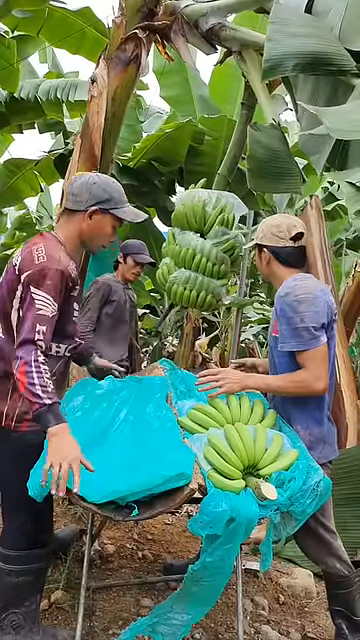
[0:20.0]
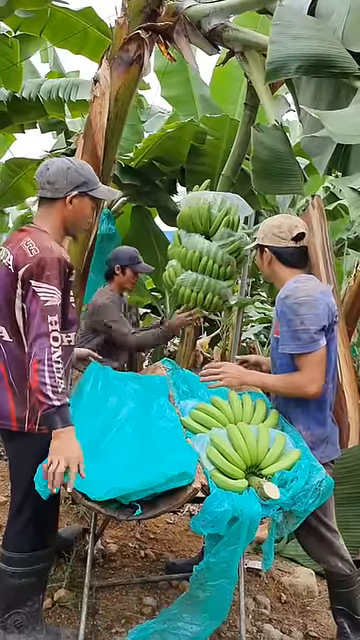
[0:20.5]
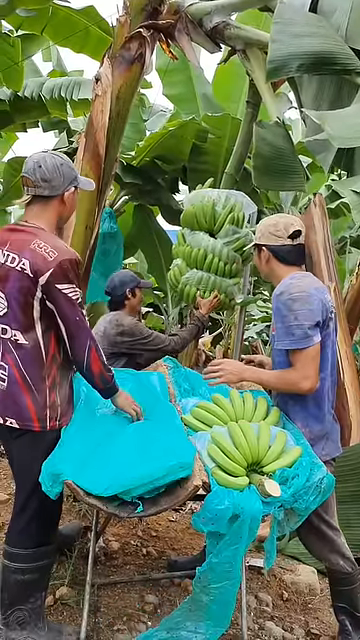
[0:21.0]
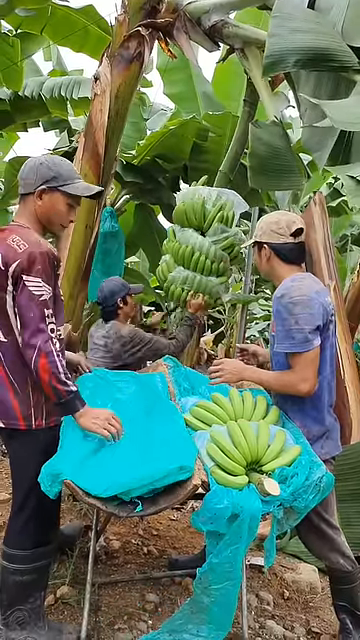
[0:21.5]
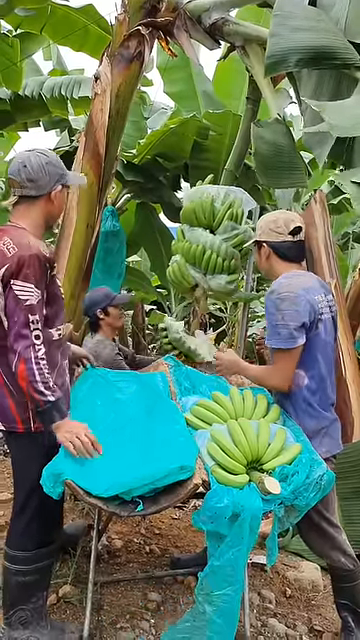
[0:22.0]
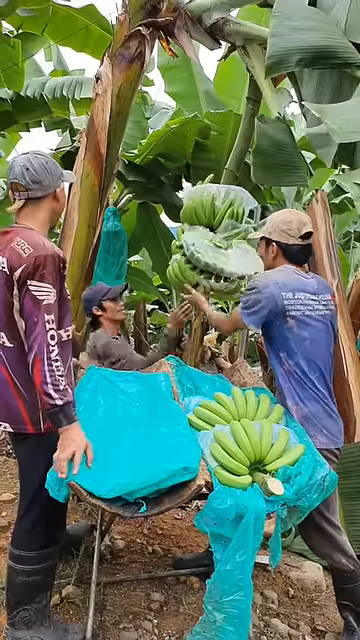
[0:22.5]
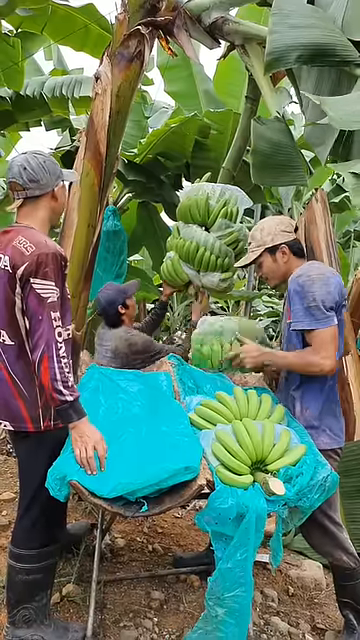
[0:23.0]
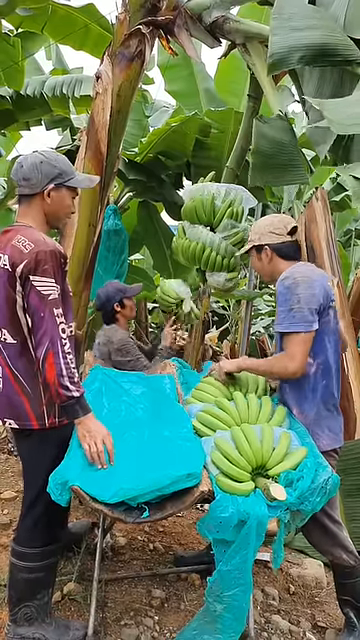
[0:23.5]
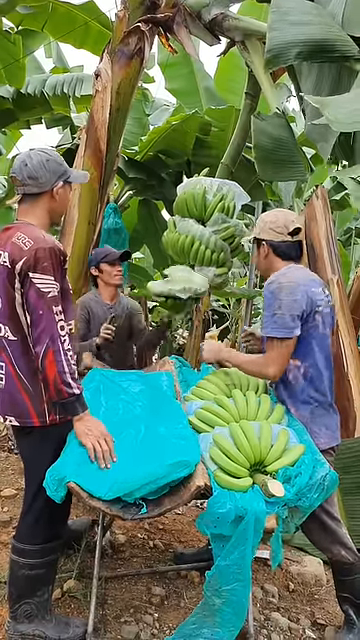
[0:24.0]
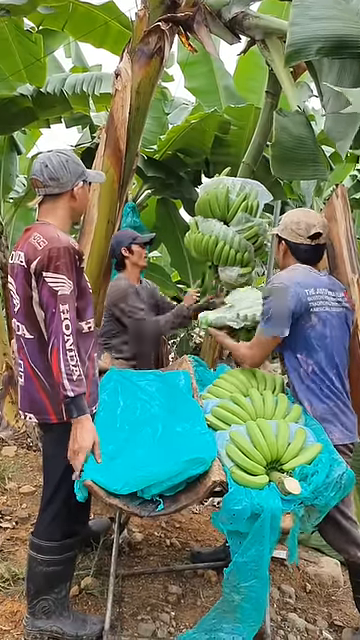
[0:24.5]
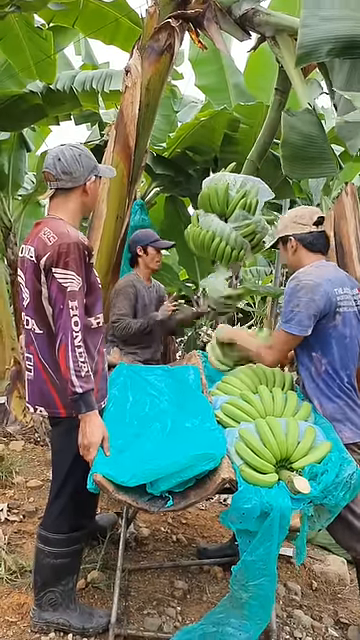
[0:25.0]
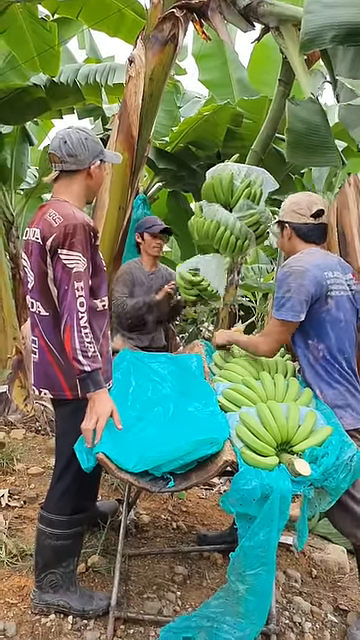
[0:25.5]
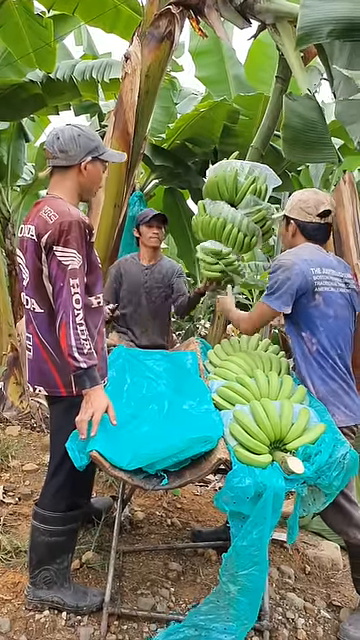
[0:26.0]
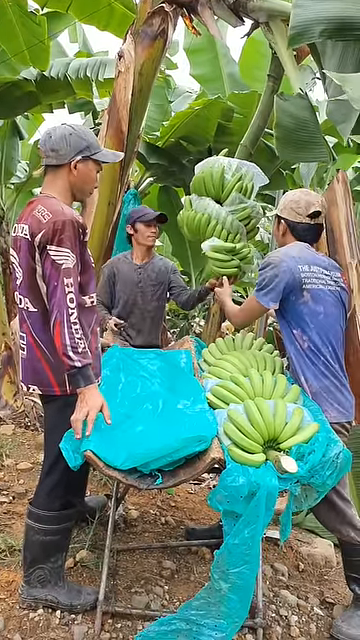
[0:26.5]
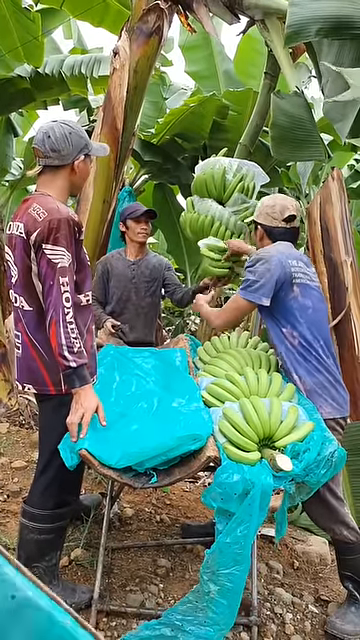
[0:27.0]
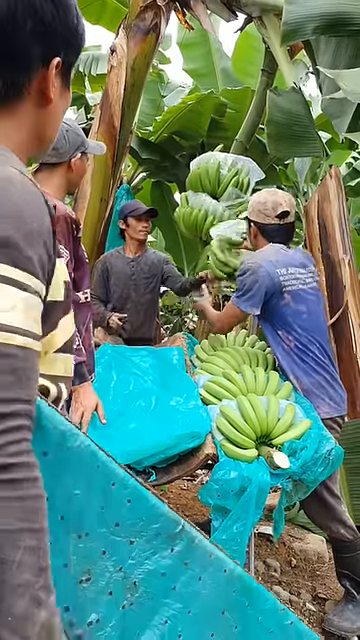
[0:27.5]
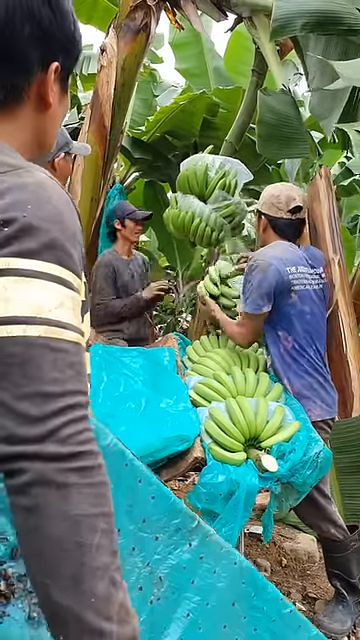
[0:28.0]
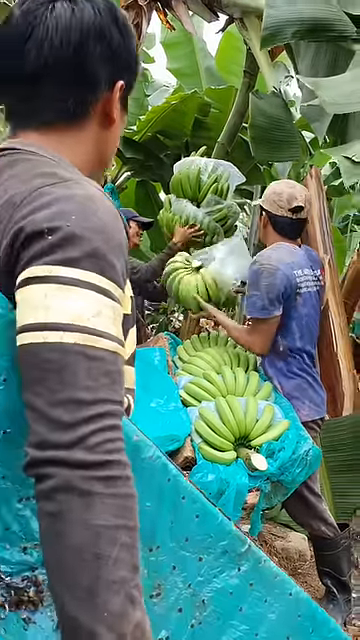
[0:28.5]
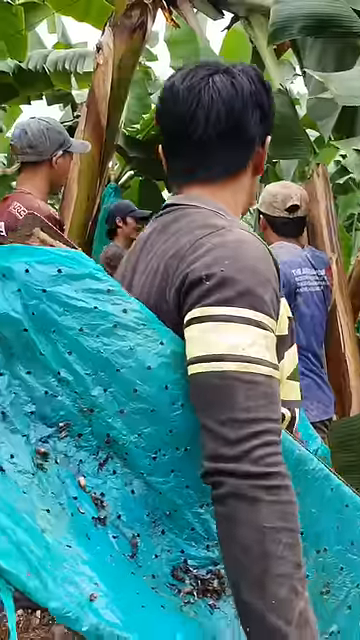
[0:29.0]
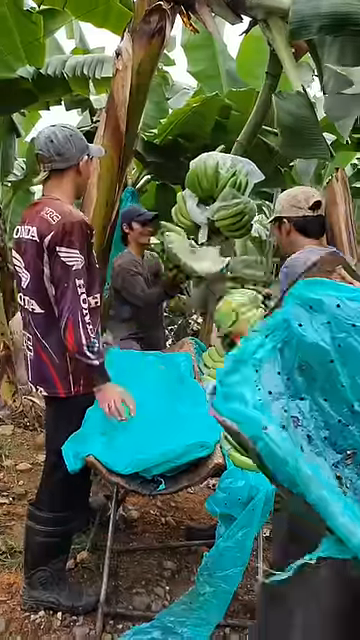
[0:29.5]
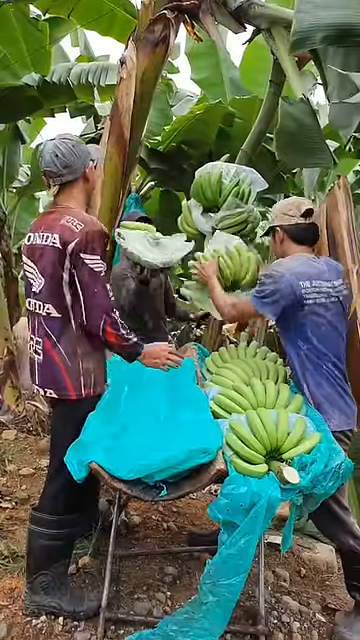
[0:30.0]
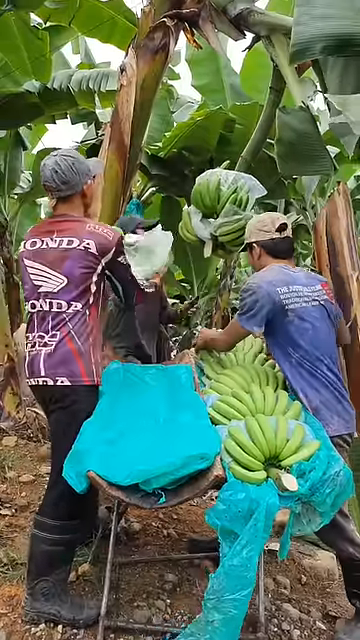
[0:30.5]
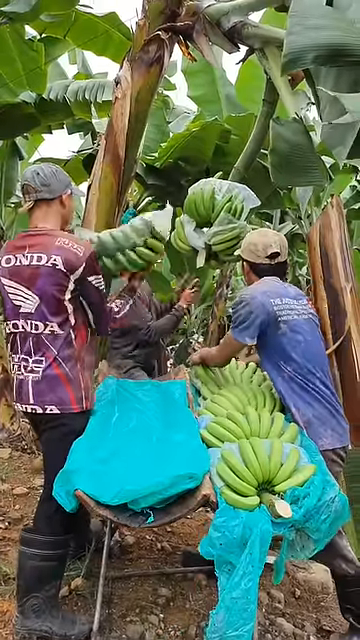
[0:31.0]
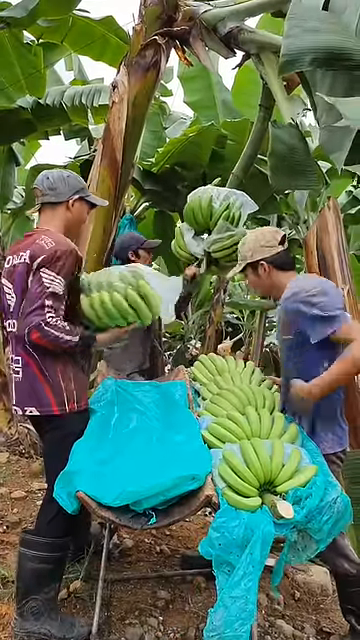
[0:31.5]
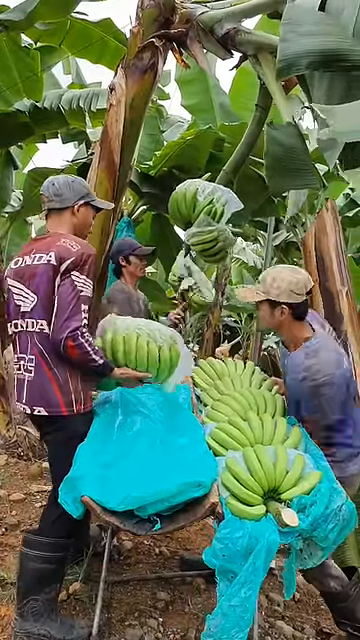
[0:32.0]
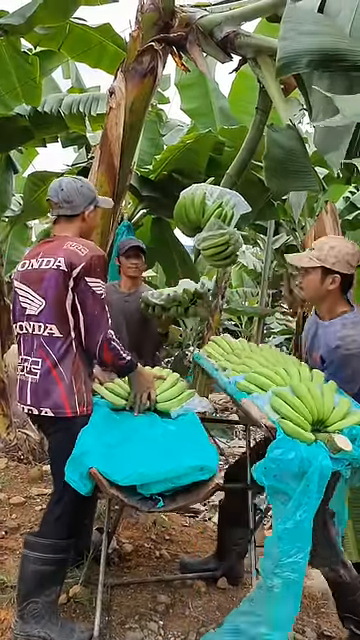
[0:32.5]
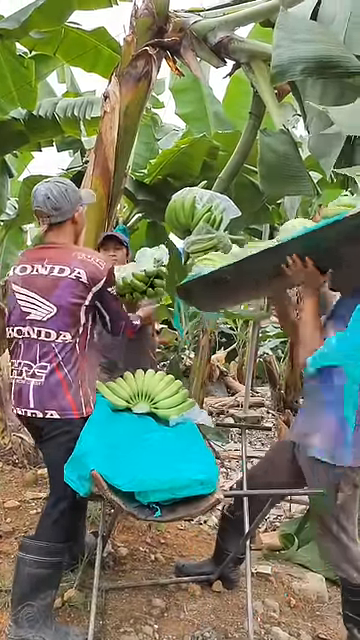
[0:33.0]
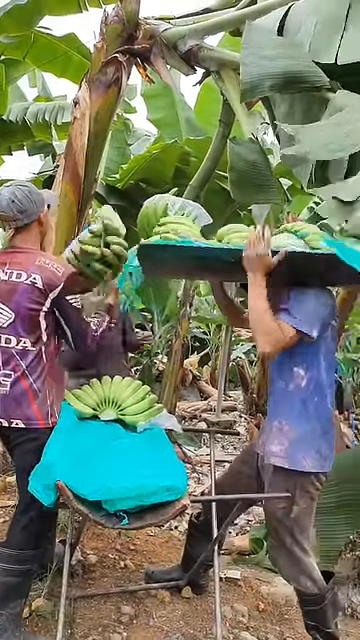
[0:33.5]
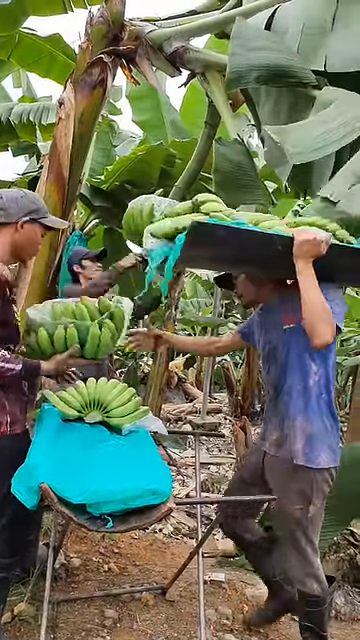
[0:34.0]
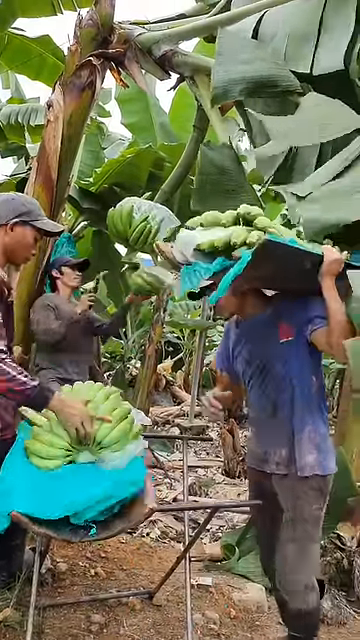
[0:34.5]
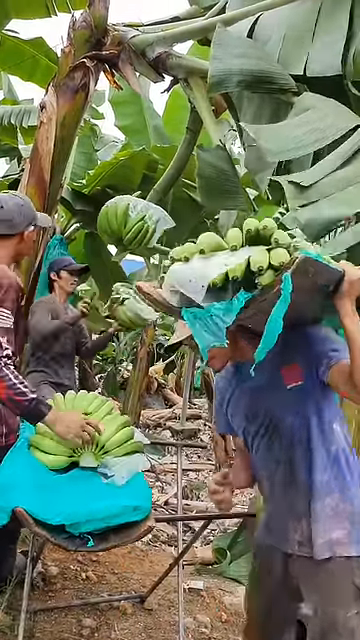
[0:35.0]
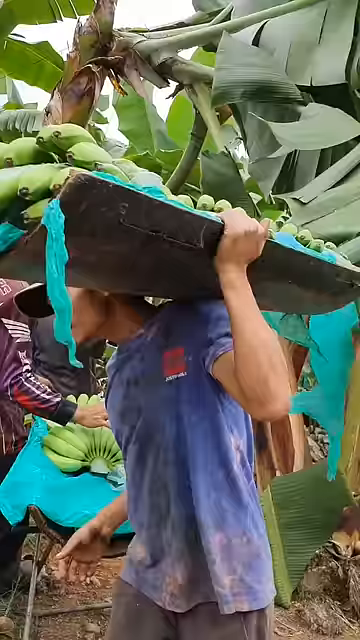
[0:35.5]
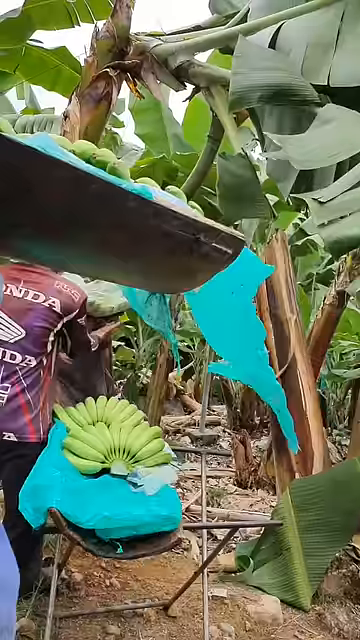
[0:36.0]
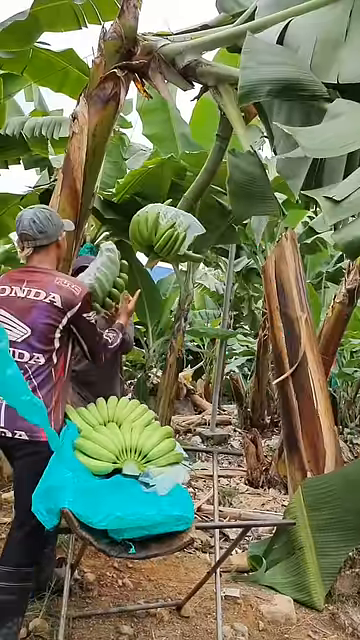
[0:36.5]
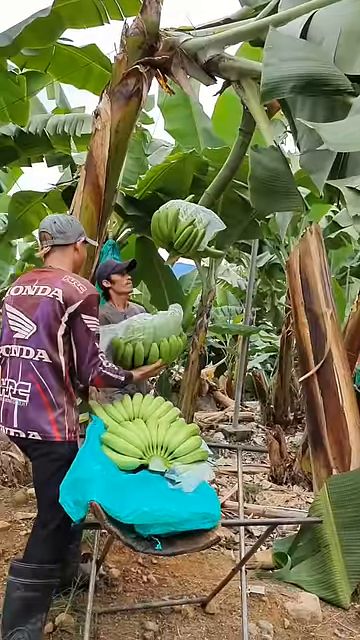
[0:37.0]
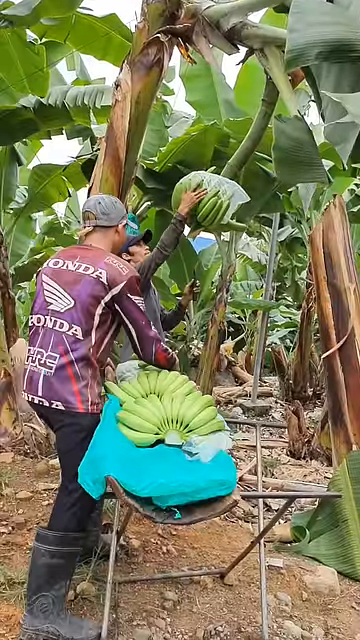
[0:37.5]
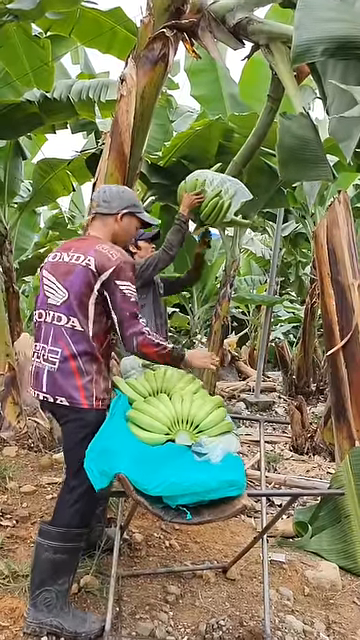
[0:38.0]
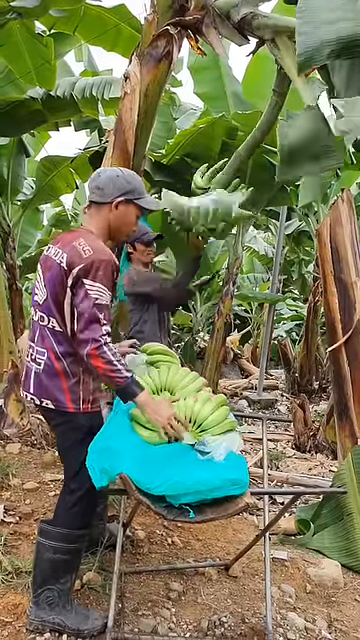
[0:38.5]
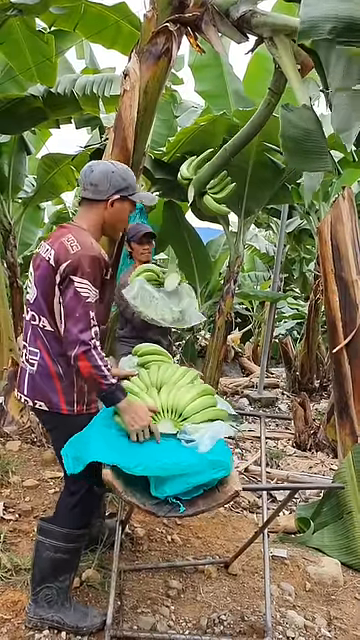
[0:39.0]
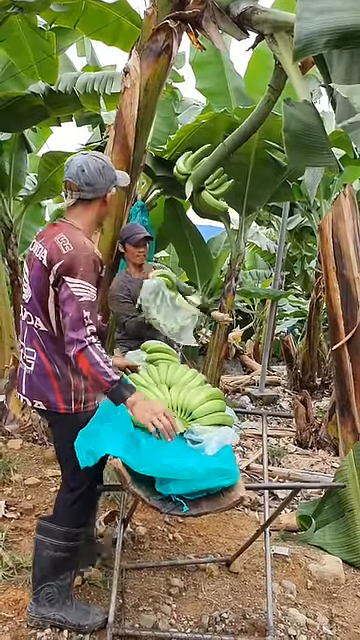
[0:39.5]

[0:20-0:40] The video is entitled this is the way we harvest banana. Three men stand in front of a banana tree, all wearing baseball caps, long pants, and short- and long-sleeved t-shirts. Two of them stand by a makeshift table, and the third, holding a knife, stands underneath the bananas ready to be harvested. The third man cuts large batches of bananas and tosses them to one of the two men at the makeshift table. When the table is full, one of the other two men picks up the tabletop and walks away with it. Toward the middle, a fourth man walks in front of the camera, stops for a second in front of the three men harvesting bananas, and then keeps walking.